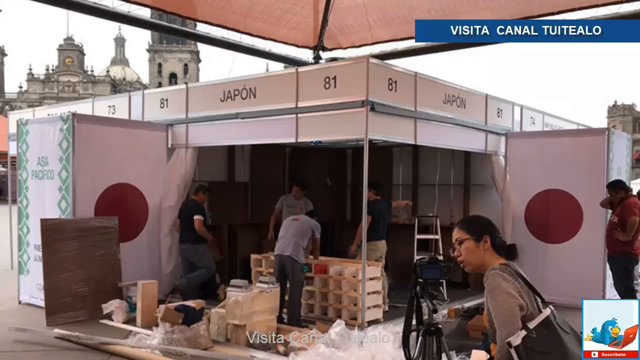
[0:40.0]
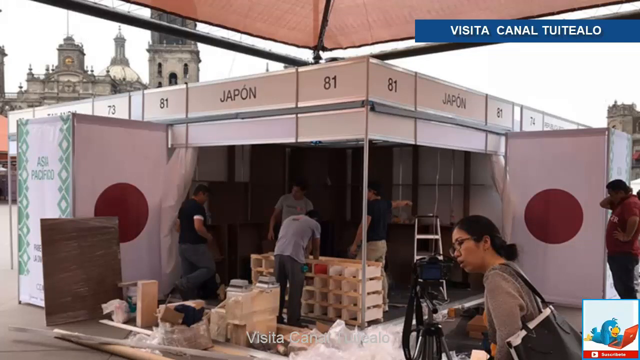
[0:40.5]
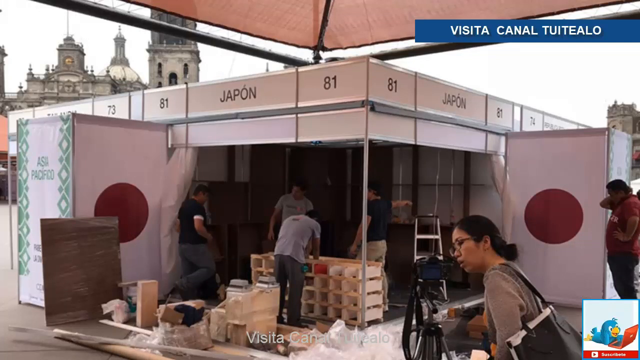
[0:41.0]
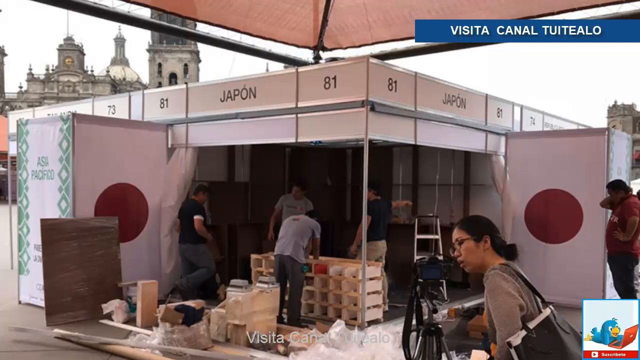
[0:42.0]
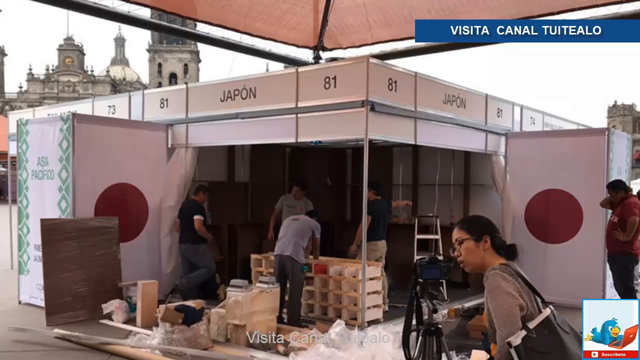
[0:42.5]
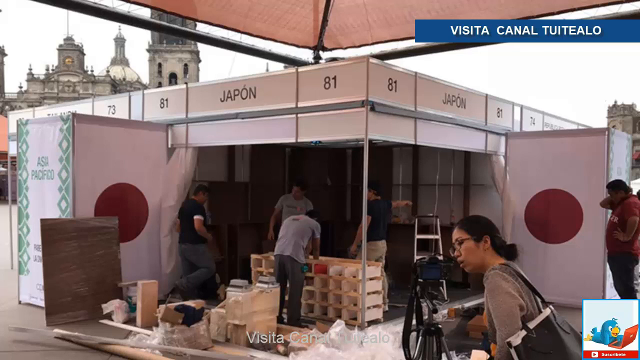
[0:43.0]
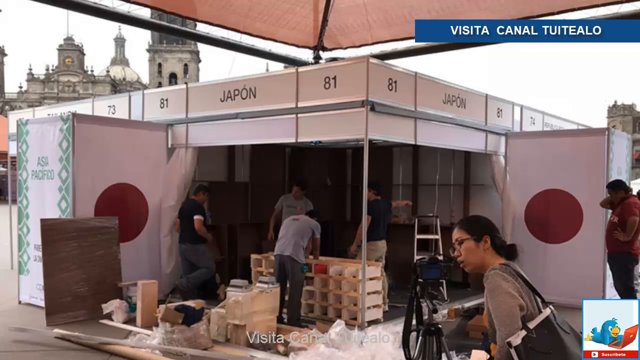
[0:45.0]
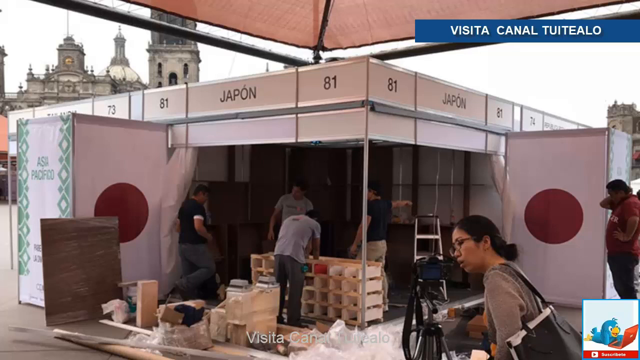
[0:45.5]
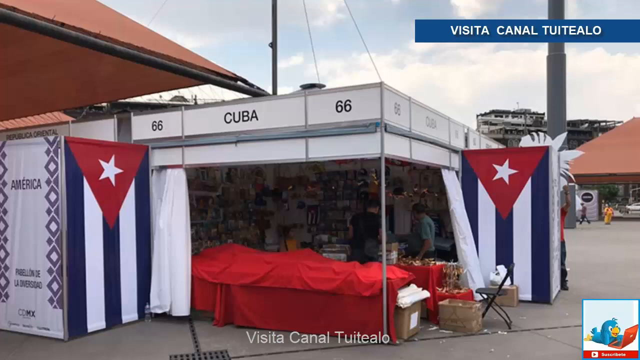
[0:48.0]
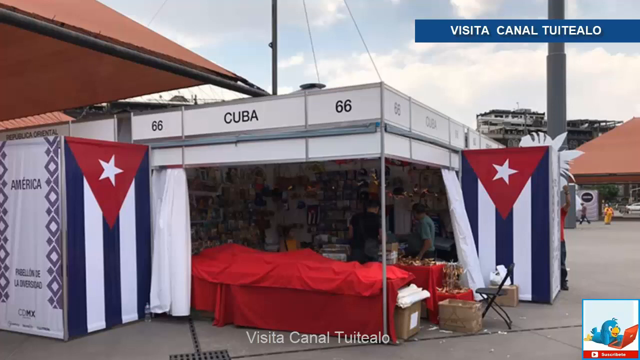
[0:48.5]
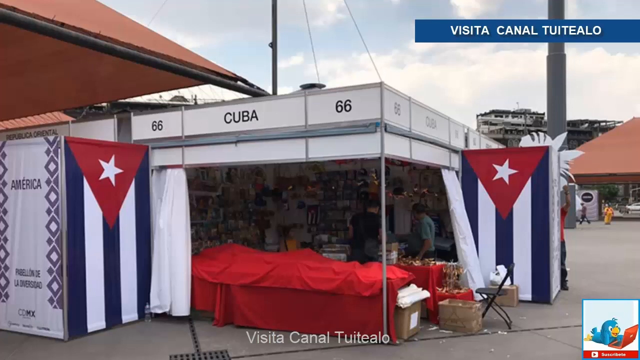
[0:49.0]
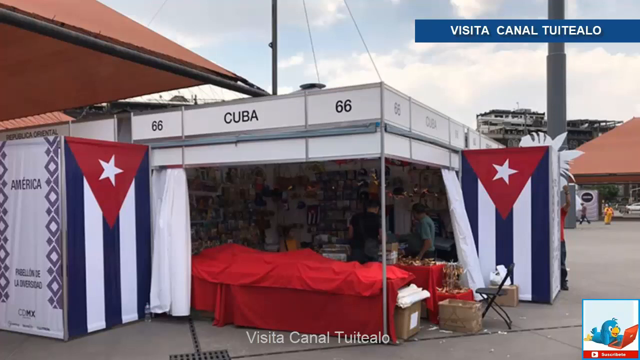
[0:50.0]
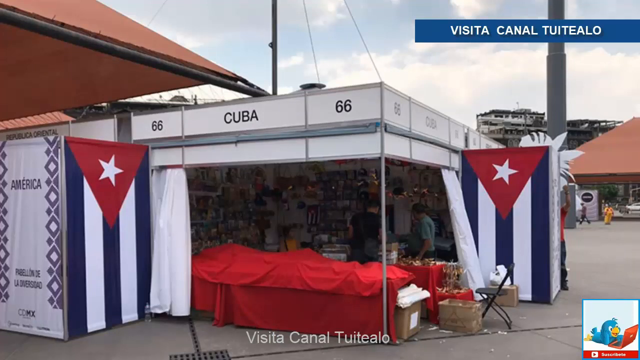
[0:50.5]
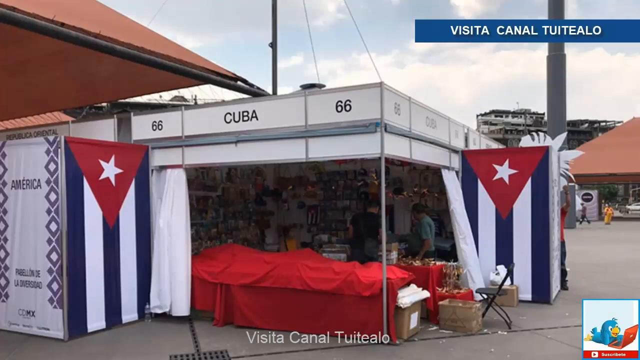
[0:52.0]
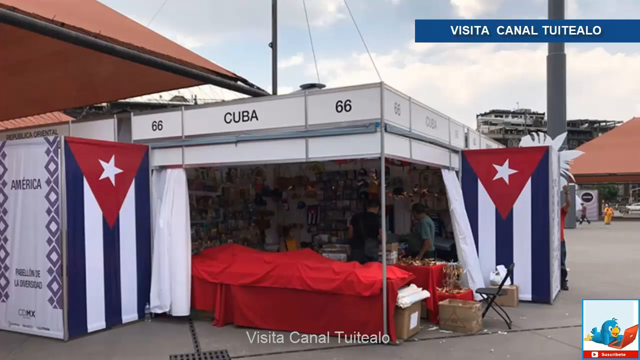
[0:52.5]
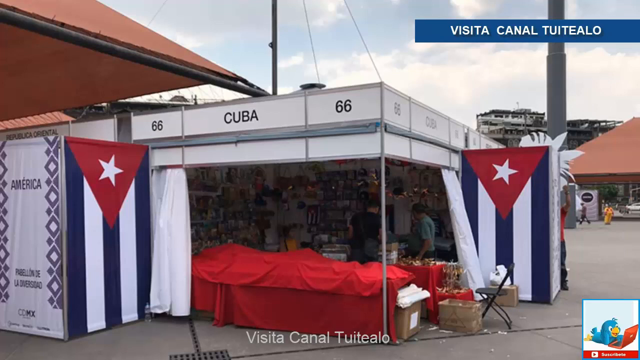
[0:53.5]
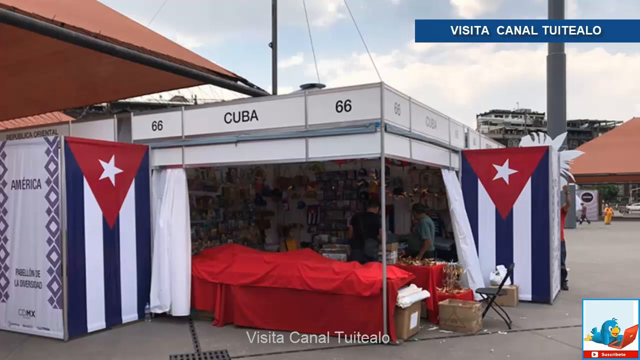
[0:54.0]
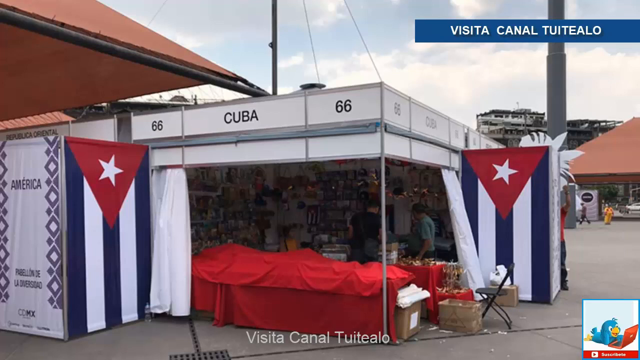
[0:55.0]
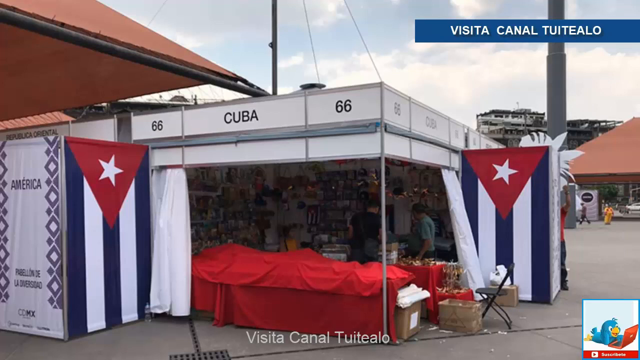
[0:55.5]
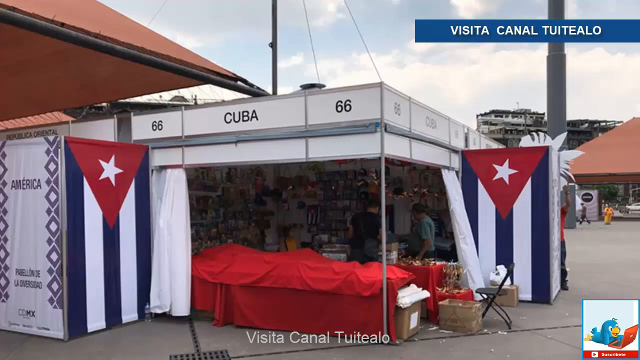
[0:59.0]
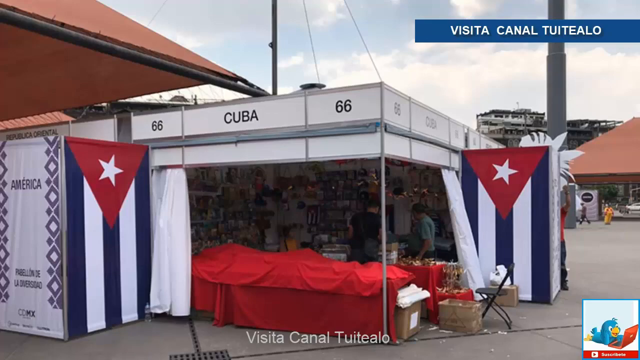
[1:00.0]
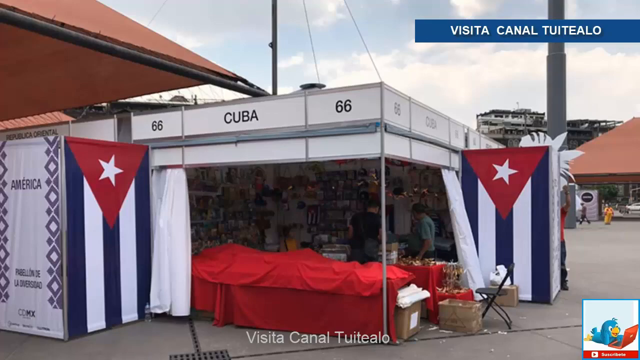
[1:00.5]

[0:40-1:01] A white panel has a burgundy circle in the middle and appears to be around 8 feet tall. Another panel has blue and white stripes with a red triangle at the top, and inside the triangle is a white star. Beside this panel is a metal fold-out chair with a white bag sitting on it, its contents unknown. A large orange tent is in the distance, with a lot of empty space. A man in a white tank top and a brown cap has his hands on his hips and appears to be looking at the merchandise for sale. The space is very cluttered with cardboard boxes. A man with dark hair in a gray short-sleeve shirt and denim jeans is standing to the side of the merchandise; it is unclear whether he is a worker or a patron wanting to make a purchase.